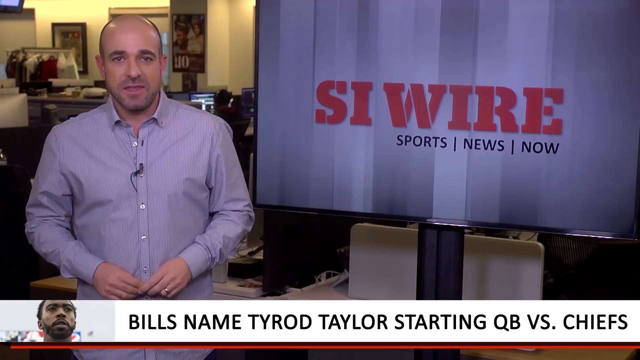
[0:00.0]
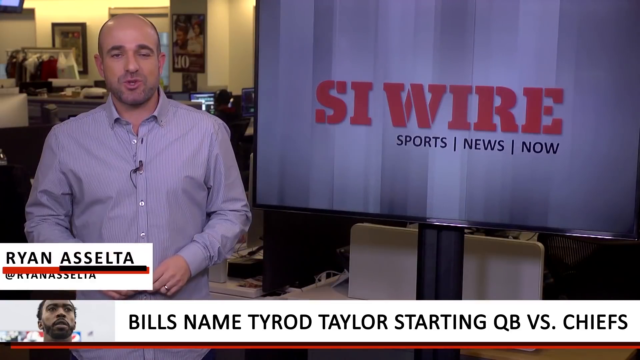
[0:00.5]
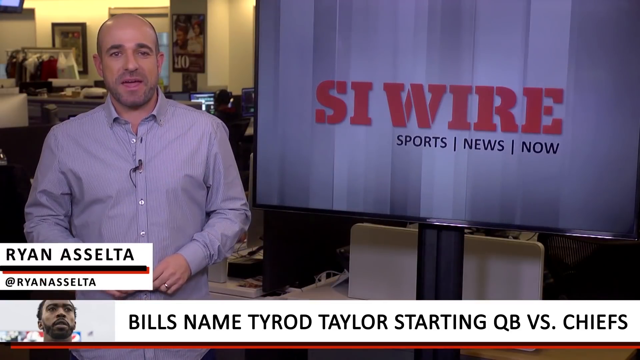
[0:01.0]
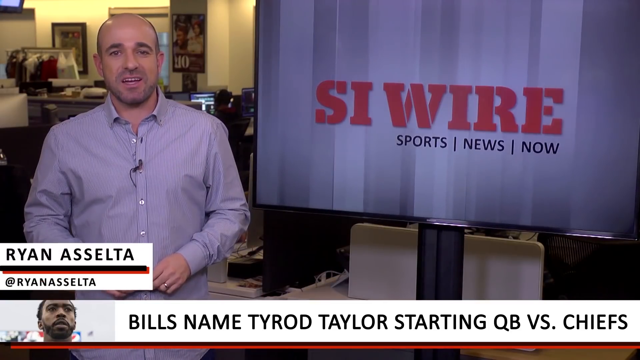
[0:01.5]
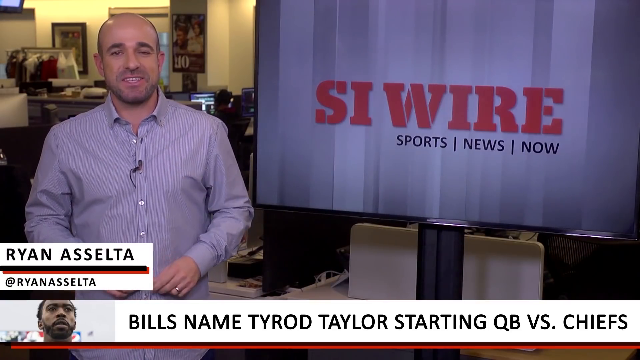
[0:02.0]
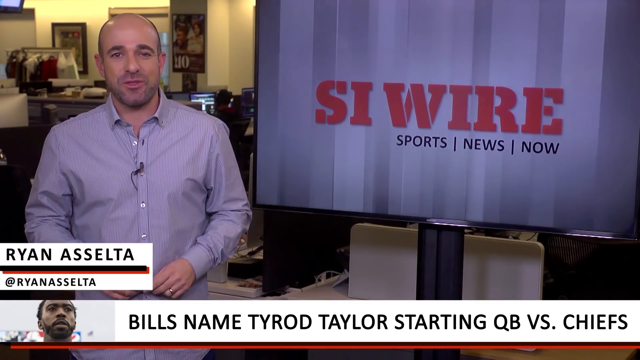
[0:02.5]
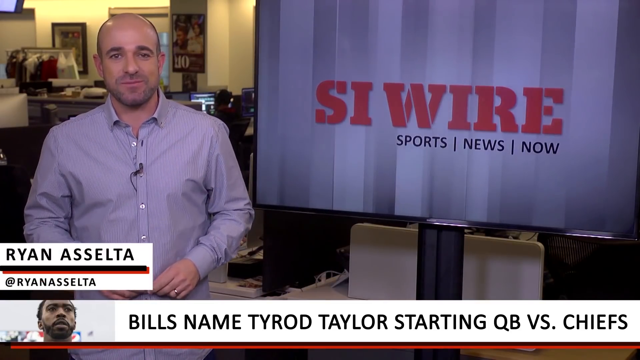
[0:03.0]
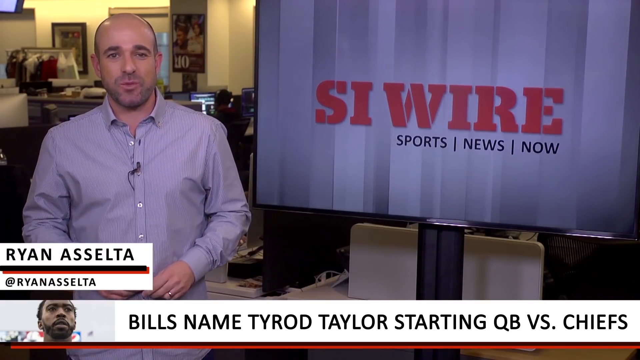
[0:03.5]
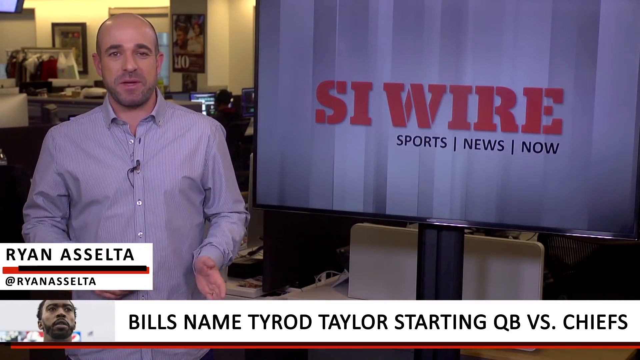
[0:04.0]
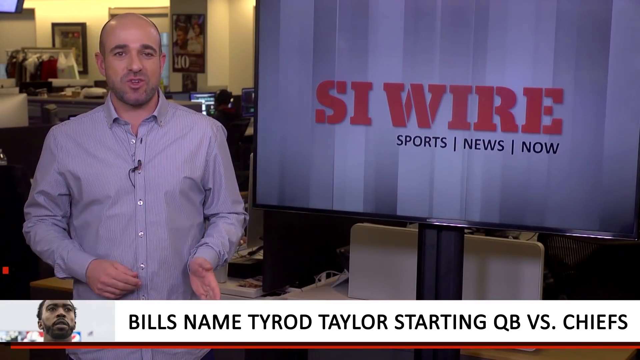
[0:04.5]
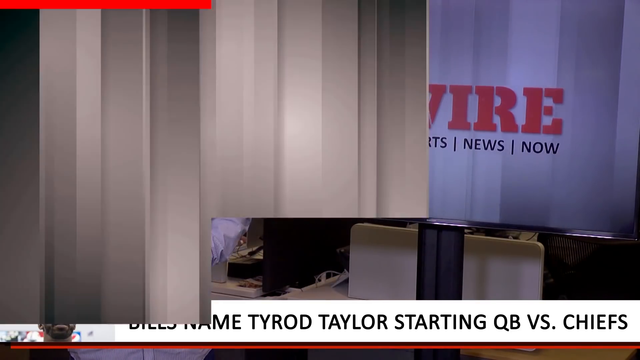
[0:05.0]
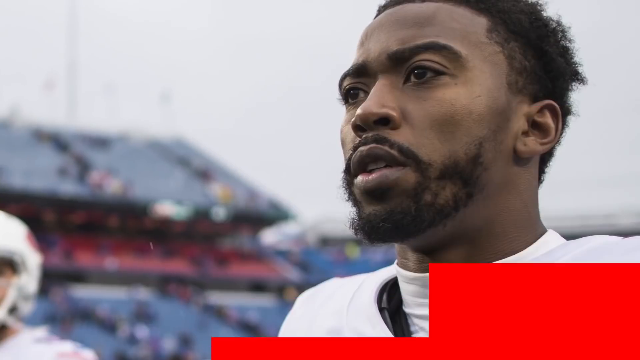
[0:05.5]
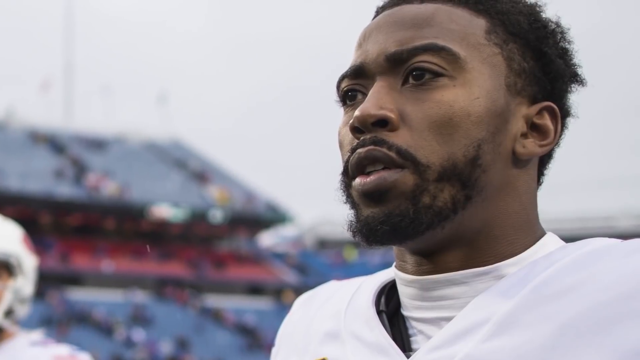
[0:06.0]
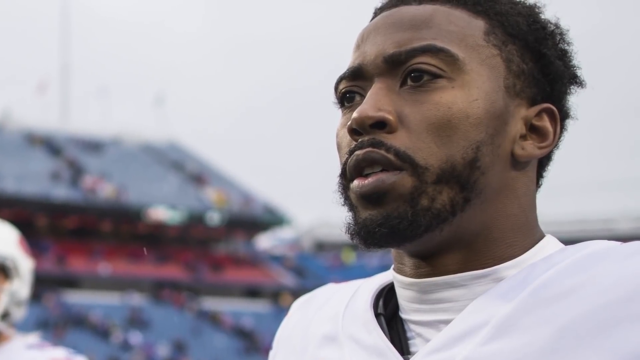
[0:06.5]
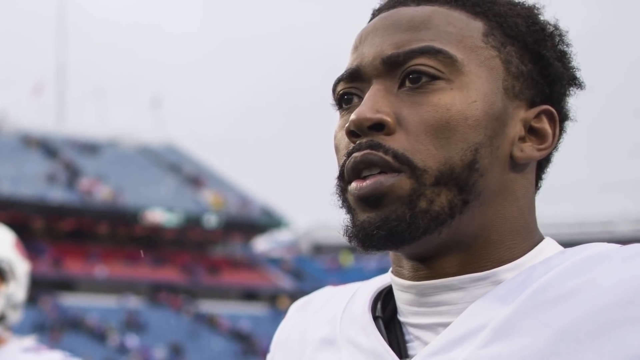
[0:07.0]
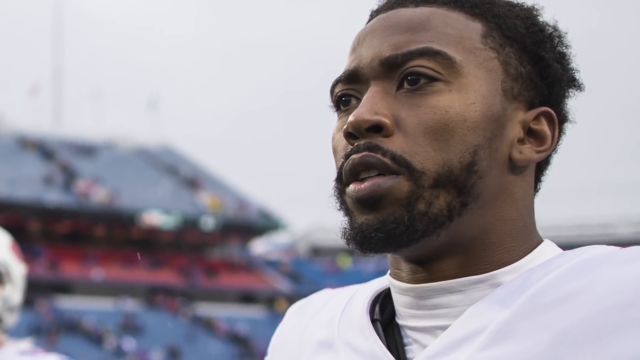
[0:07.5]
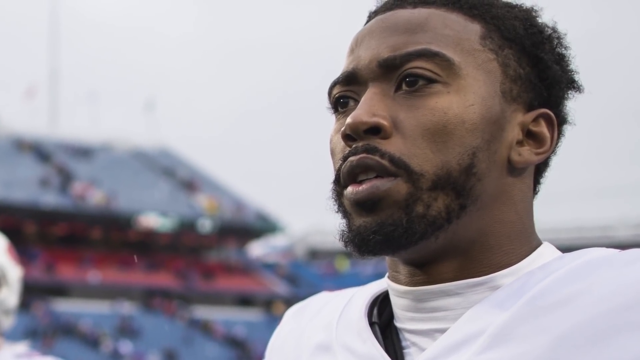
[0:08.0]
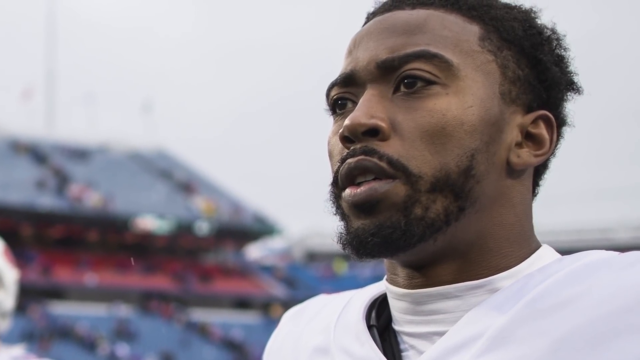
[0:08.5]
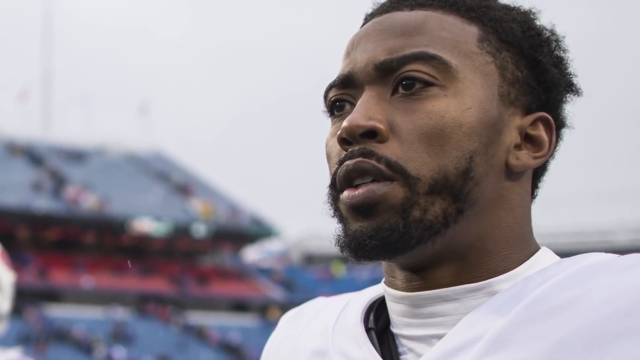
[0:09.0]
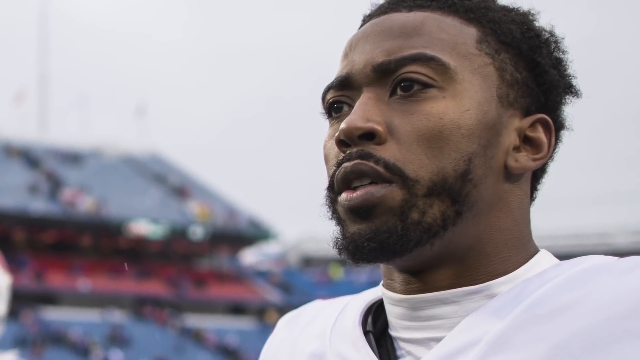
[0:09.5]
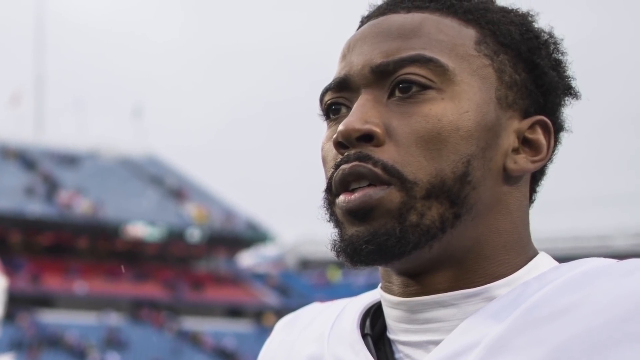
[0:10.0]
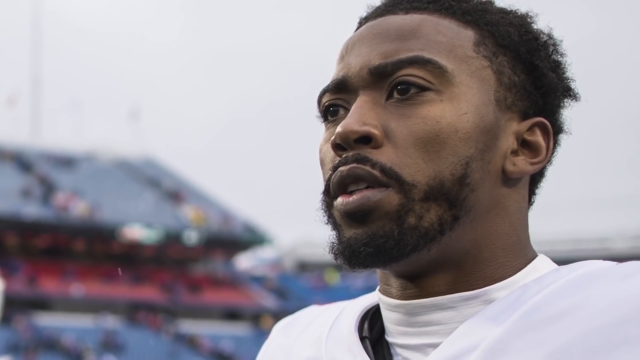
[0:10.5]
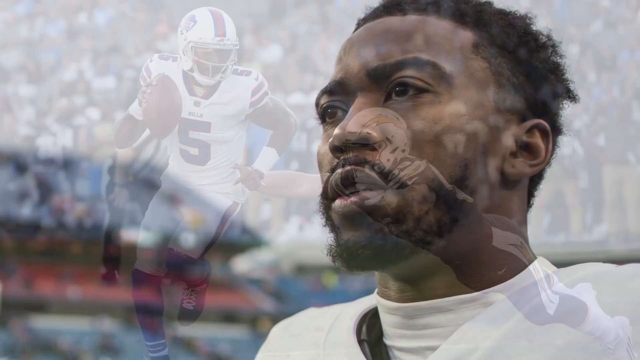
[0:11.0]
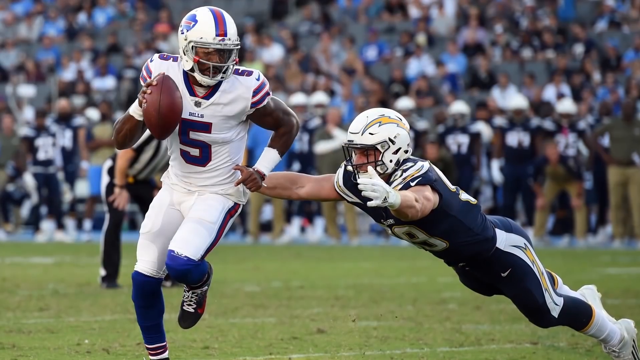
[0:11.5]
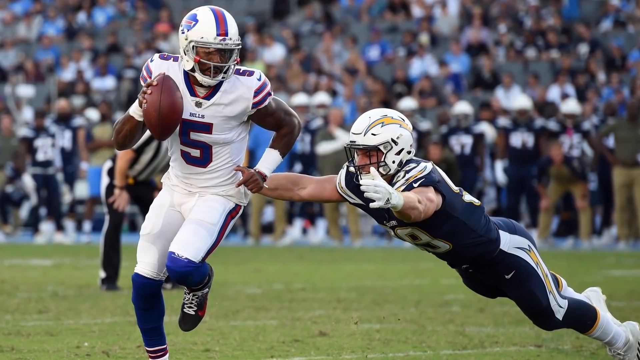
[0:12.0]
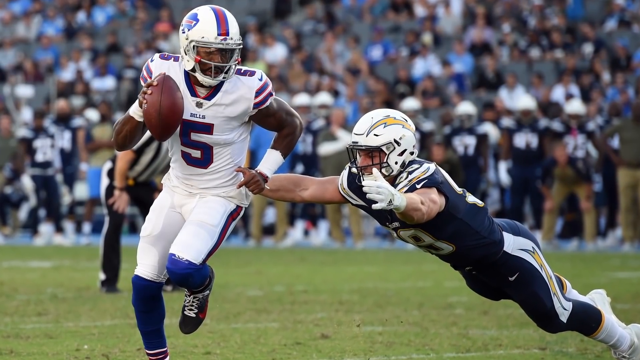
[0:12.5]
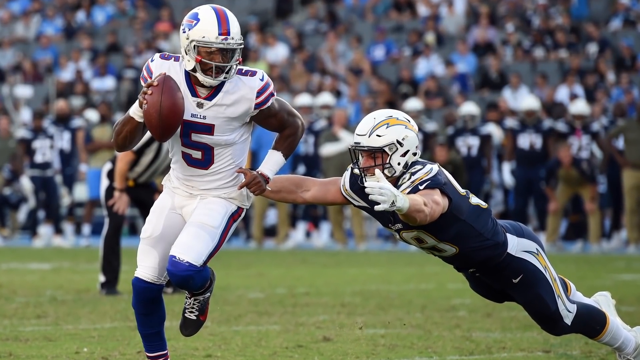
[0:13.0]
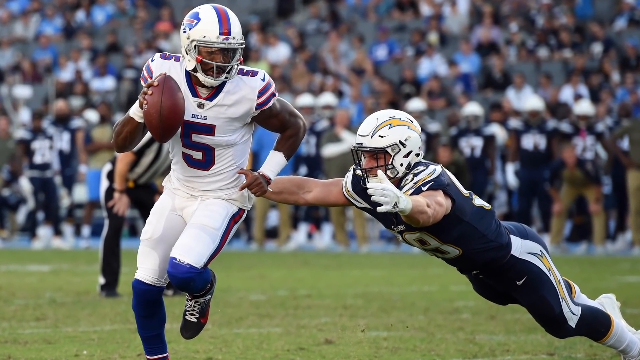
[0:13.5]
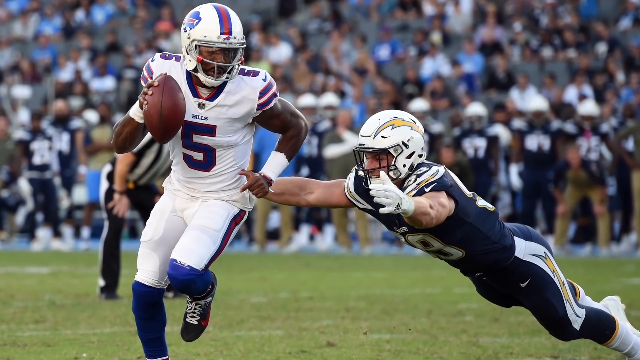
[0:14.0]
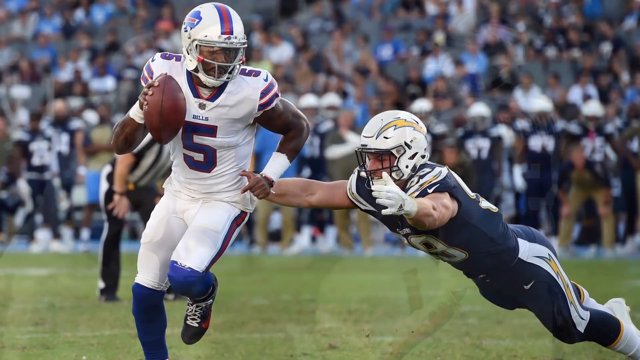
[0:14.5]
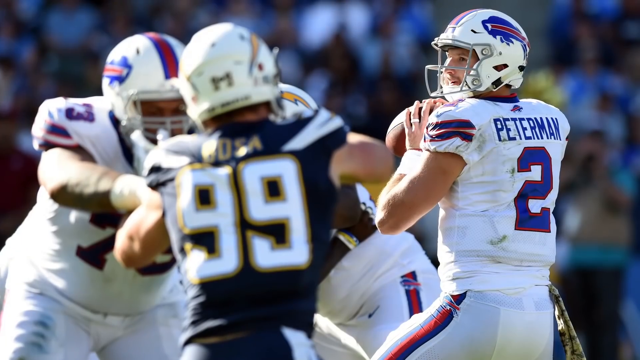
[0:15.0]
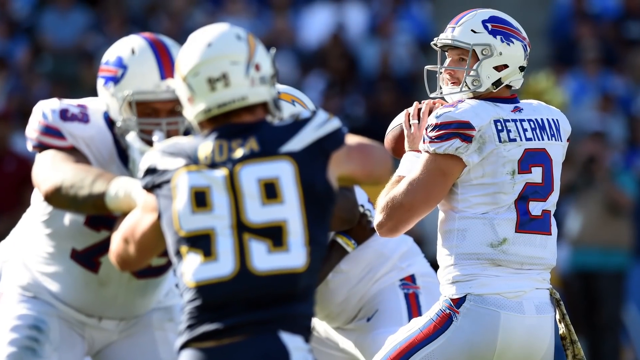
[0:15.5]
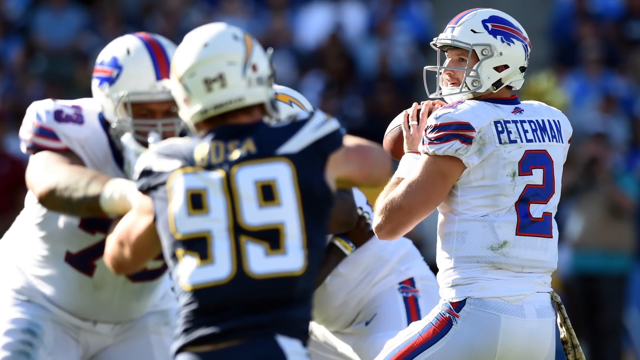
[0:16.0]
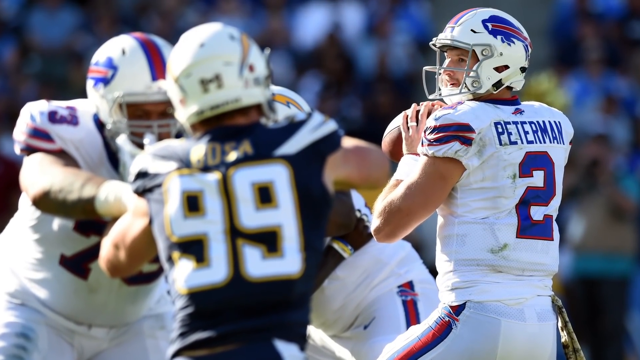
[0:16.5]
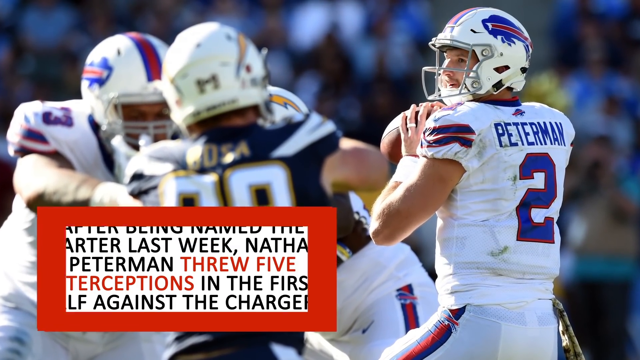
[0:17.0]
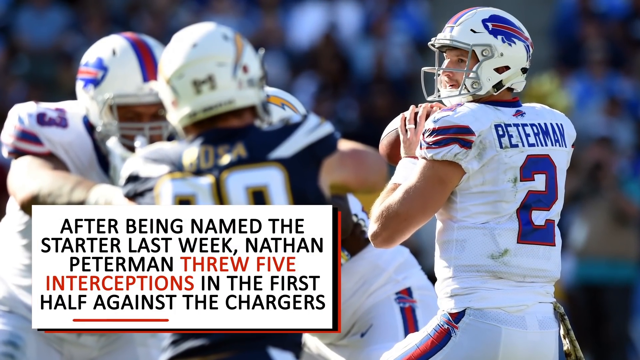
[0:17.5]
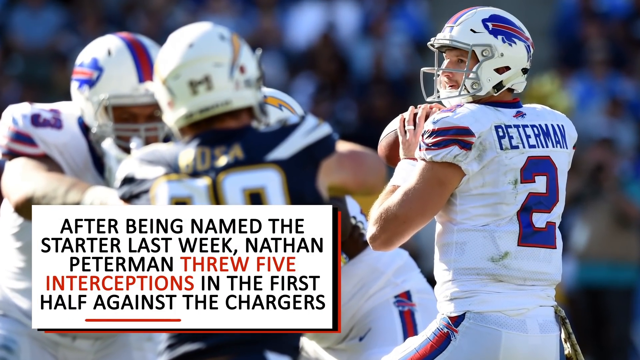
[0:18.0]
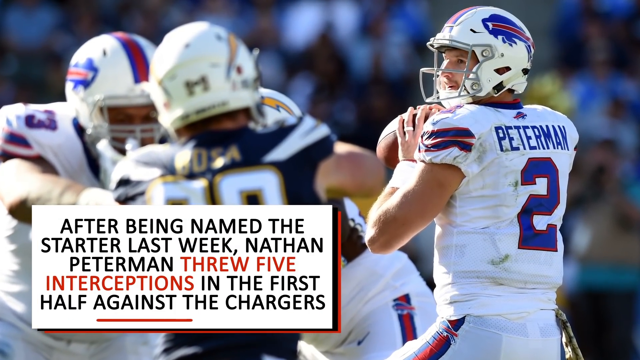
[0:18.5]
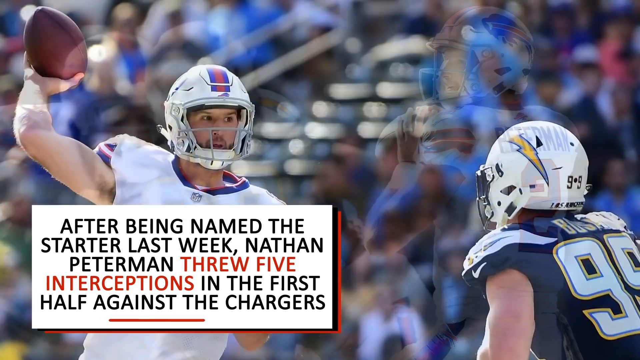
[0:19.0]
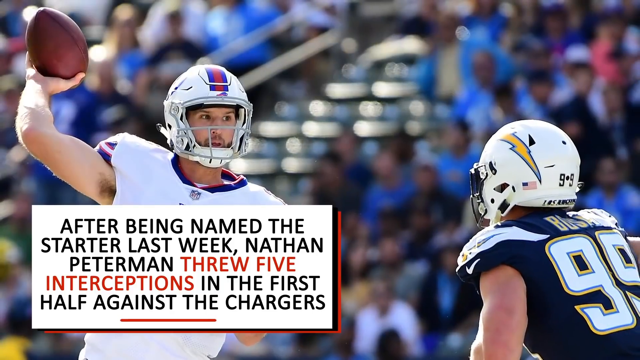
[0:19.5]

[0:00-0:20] A man in a gray suit is doing a report for the segment SI Wire, Sports News and Now. A message on the bottom of the screen reads "Bills name Tyrod Taylor, starting quarterback versus Chiefs." The man's name is Ryan Asselta. The scene transitions with red and white bars. The camera zooms into a football player, followed by a picture of two players playing football. Next comes a picture of four football players: three wear white uniforms and only one wears a navy blue uniform. The player in the number 2 uniform is holding a football. The player in the white uniform has the last name Peterman. The player in the navy blue uniform has the number 99 on the back of his uniform. The camera focuses on the four players while the background is completely blurry.